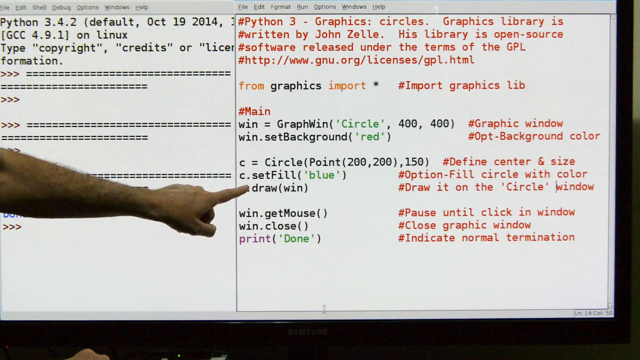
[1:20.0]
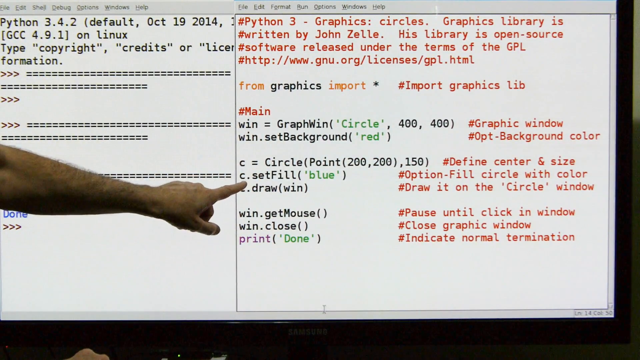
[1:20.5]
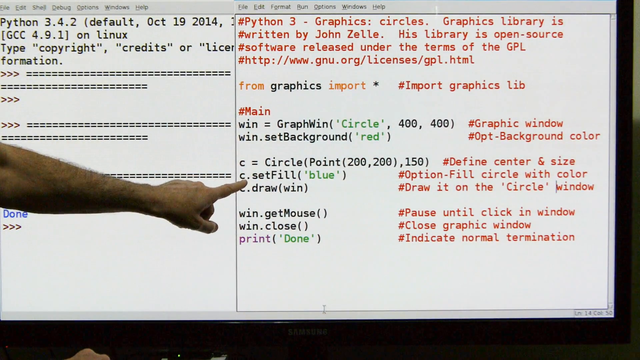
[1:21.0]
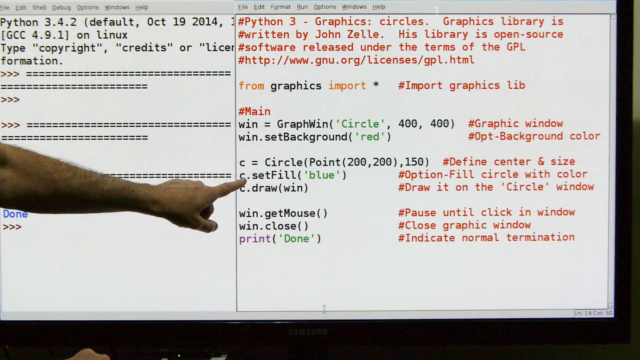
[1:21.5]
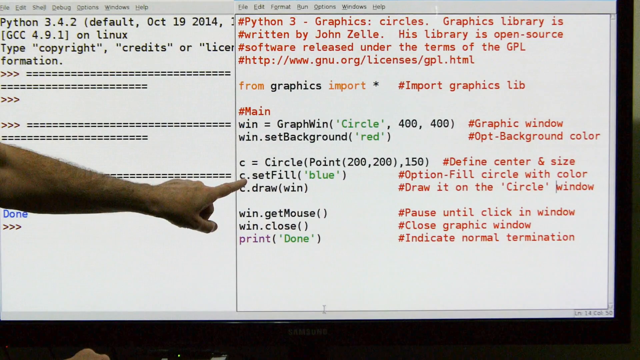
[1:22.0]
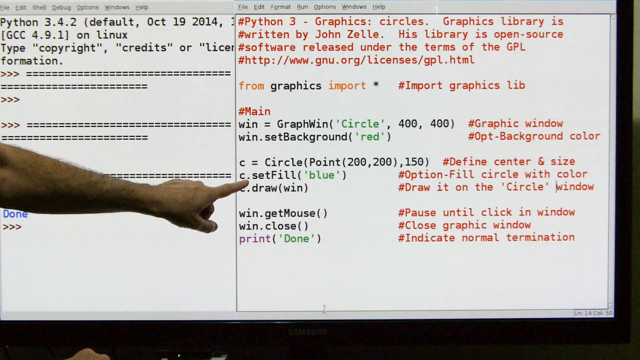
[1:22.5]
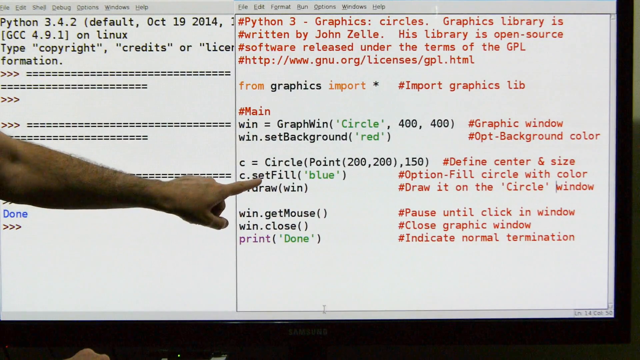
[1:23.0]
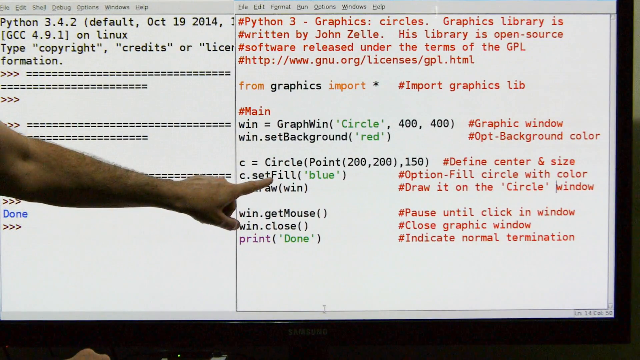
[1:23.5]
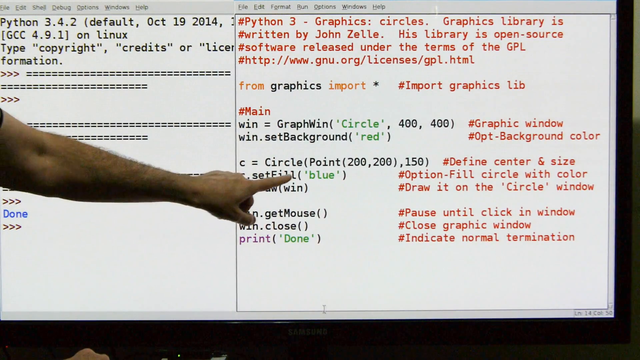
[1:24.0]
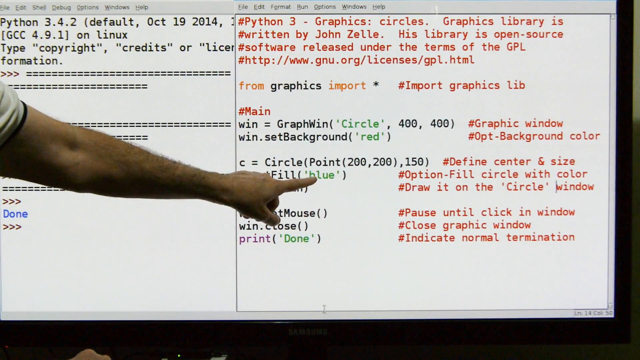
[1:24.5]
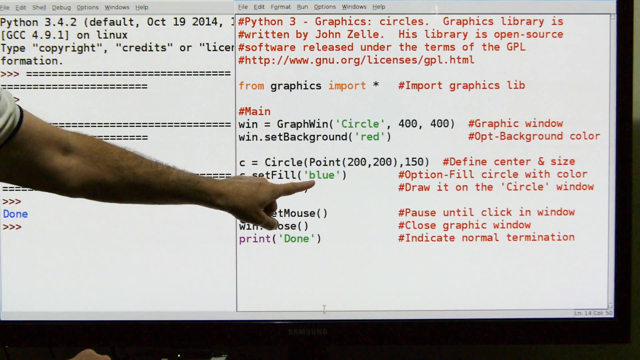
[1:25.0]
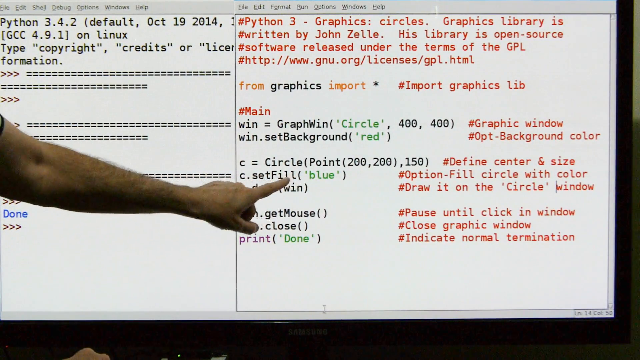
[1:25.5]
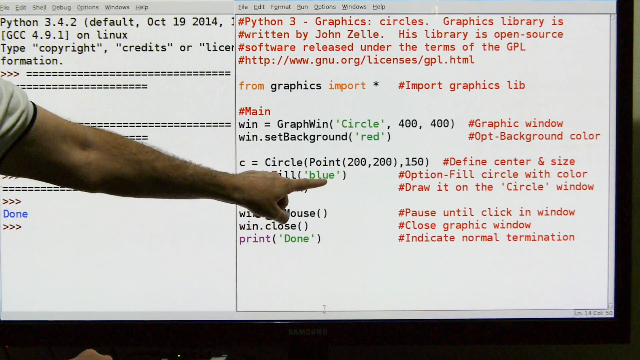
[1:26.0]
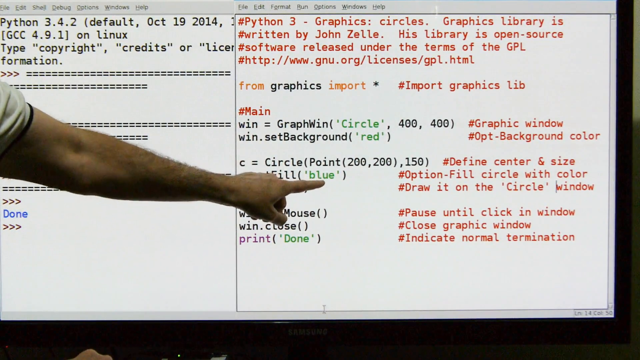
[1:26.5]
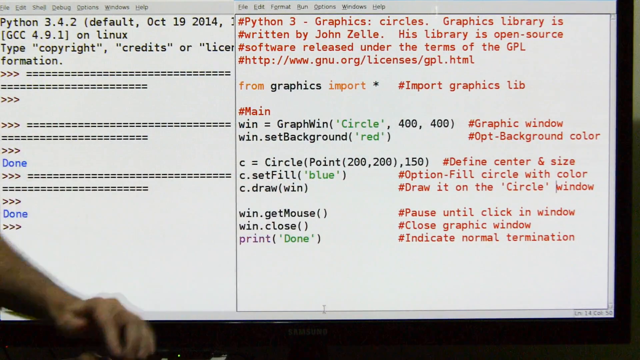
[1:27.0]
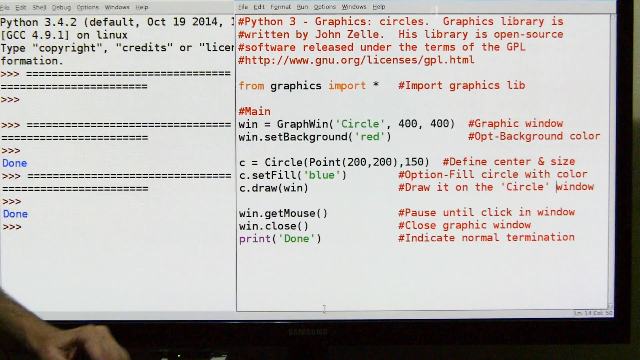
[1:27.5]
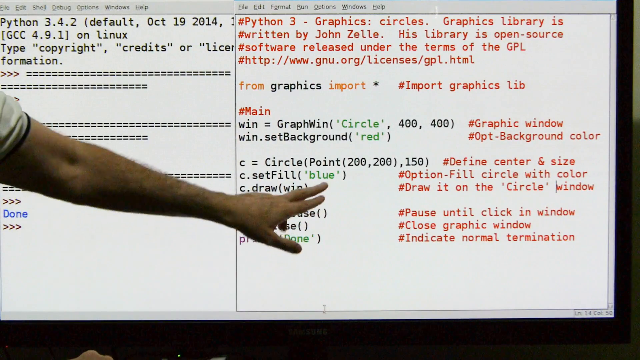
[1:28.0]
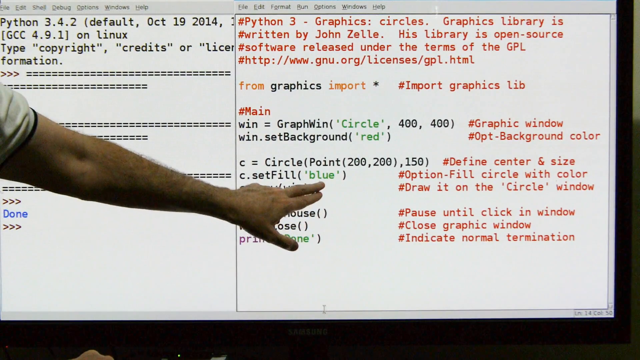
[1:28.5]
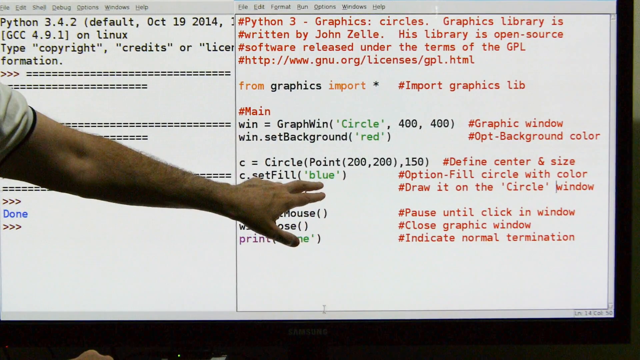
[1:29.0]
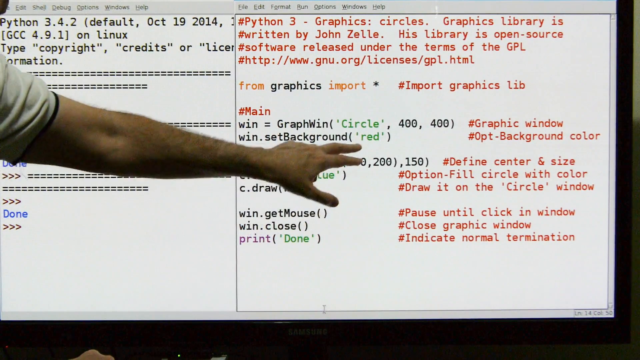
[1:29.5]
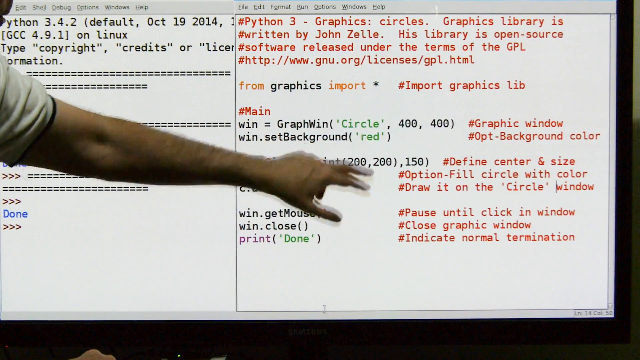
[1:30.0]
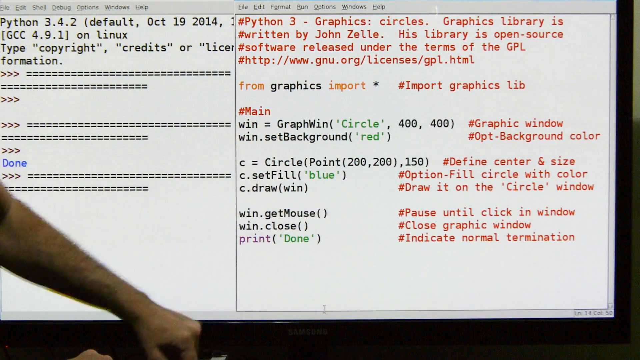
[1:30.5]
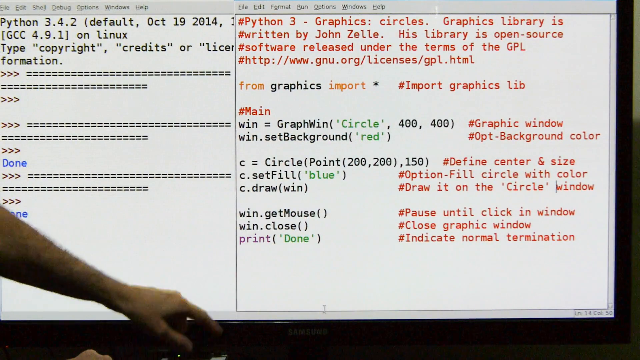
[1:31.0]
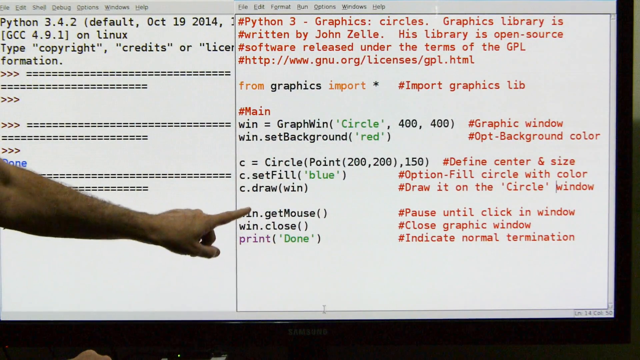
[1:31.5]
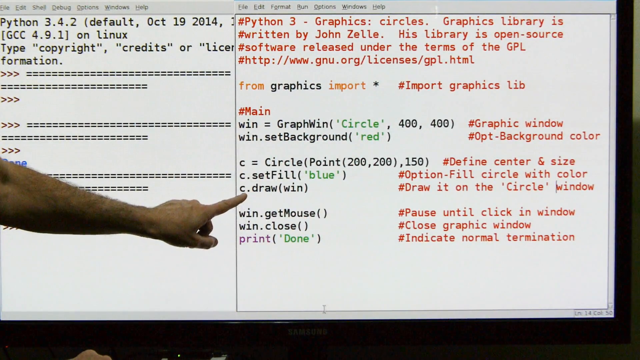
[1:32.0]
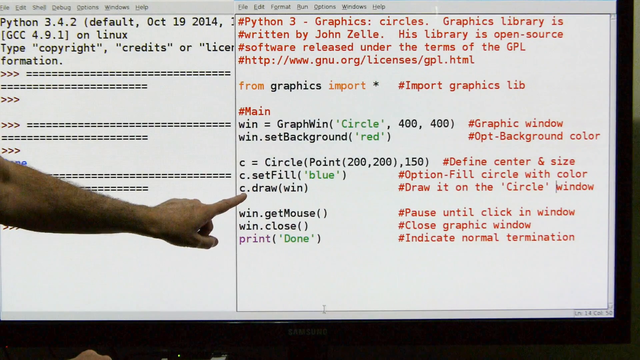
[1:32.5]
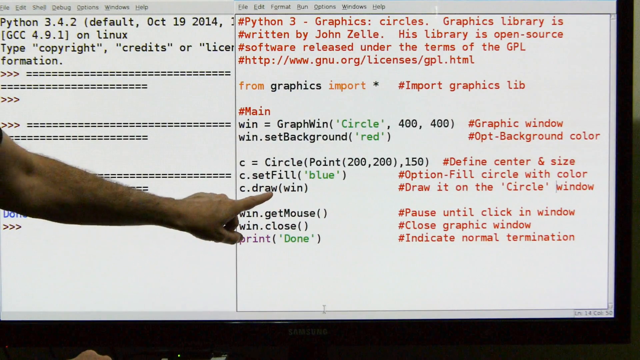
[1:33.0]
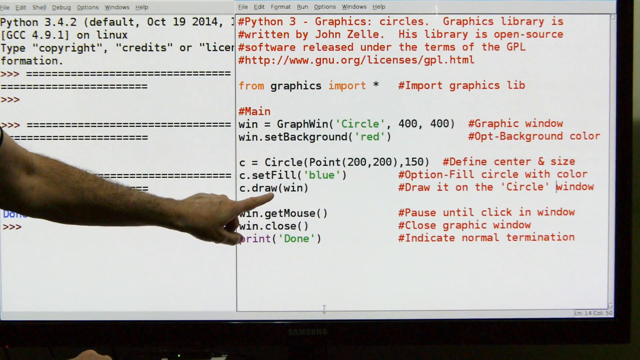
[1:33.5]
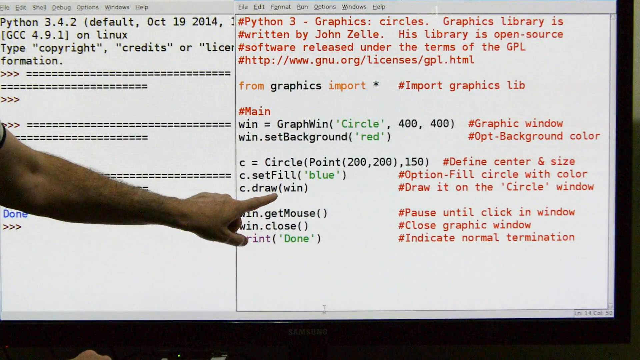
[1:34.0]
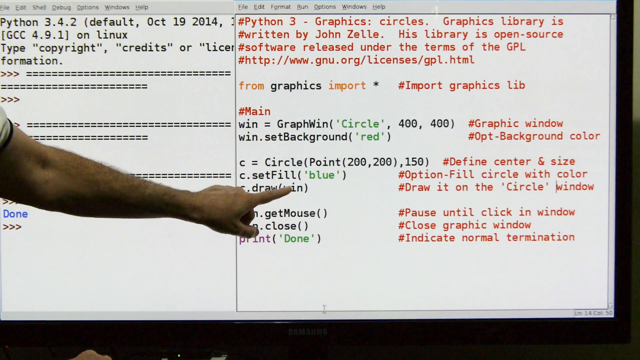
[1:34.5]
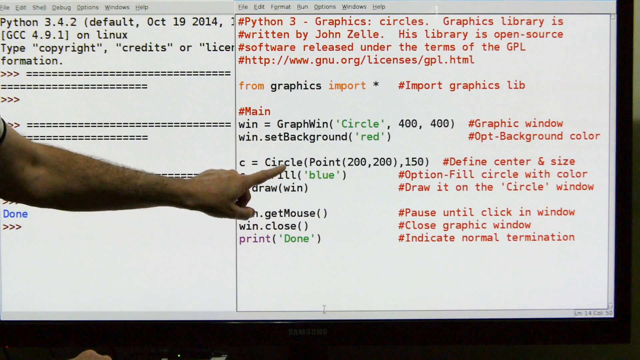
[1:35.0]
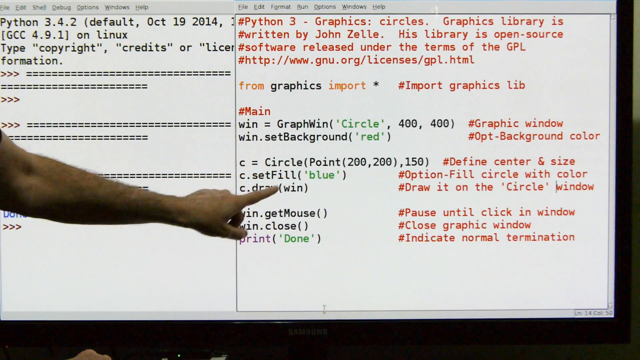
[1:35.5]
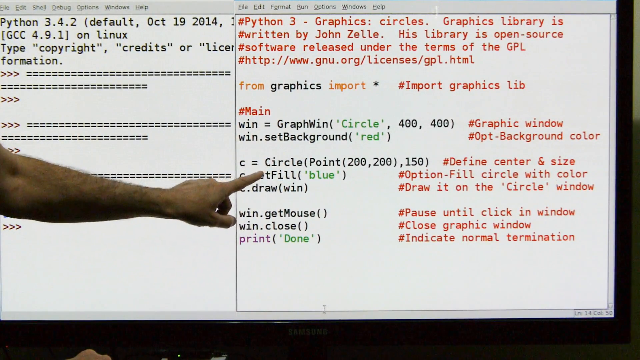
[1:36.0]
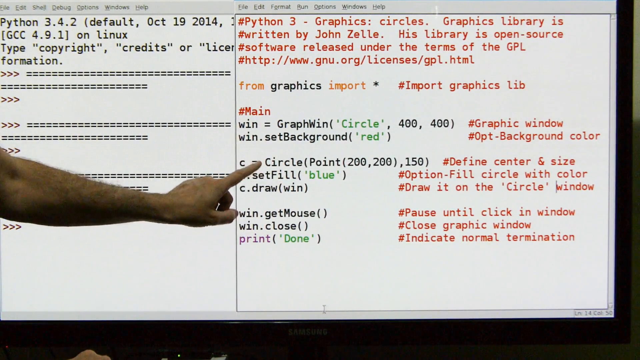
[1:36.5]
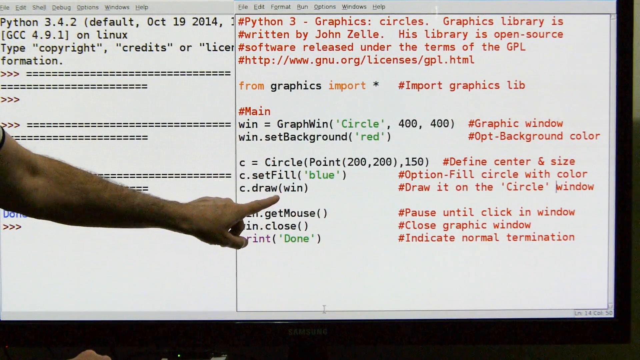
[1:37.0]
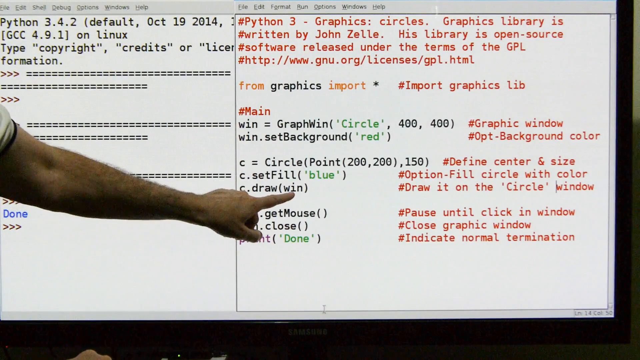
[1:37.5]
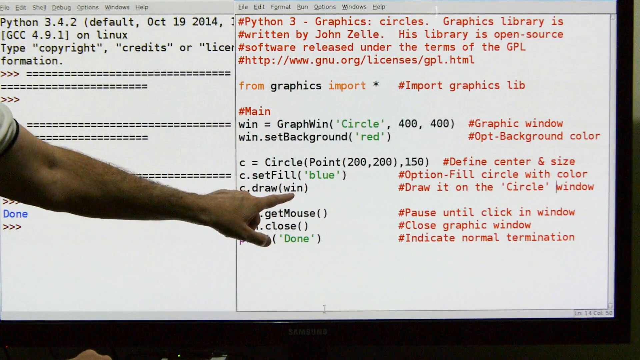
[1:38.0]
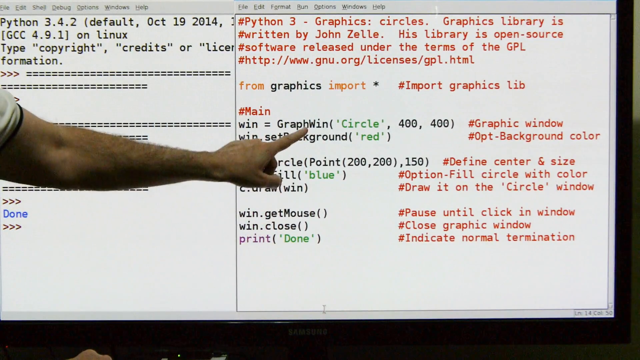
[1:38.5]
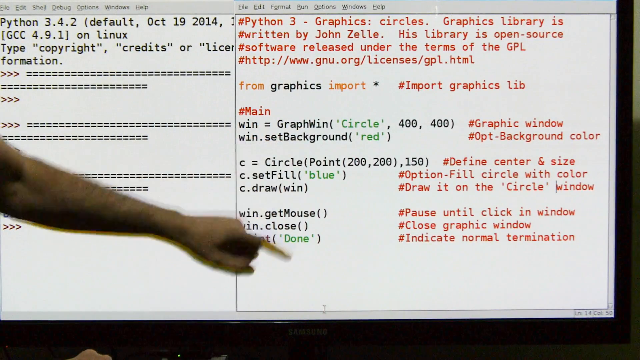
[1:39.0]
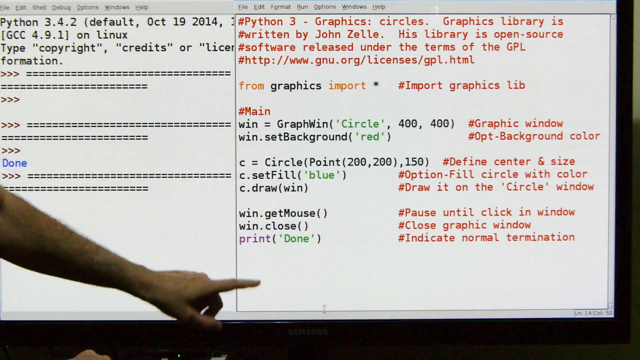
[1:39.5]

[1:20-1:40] The instructor continues explaining the Python 3 graphics circles code from John Seeley's library. He points at what looks like the fourth paragraph, showing the point and the circle with a radius of 150 and "define center and size." He then points at the option of filling the circle with color, where the word blue is written in green, and at "draw it on the circle window." Green text apparently marks something optional. He keeps pointing with his pointer finger at the white board, which has text in different colours.